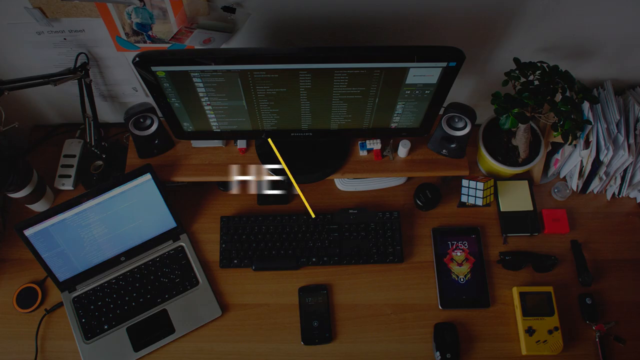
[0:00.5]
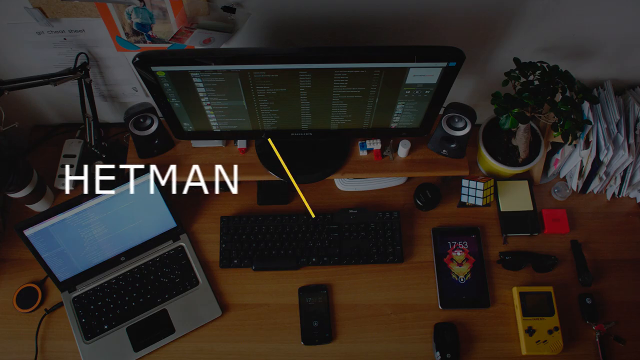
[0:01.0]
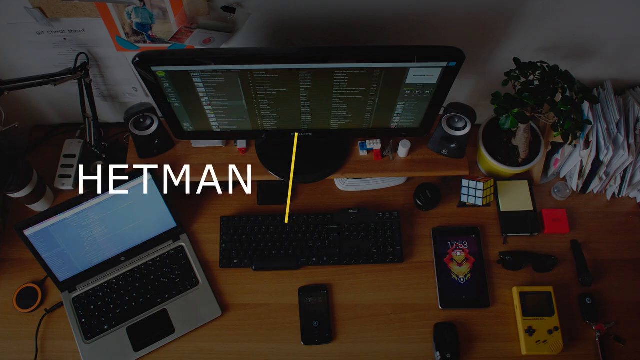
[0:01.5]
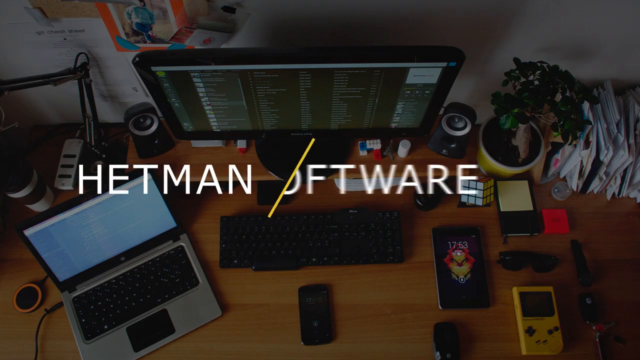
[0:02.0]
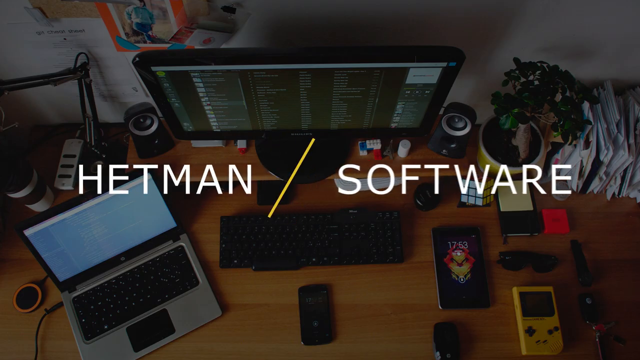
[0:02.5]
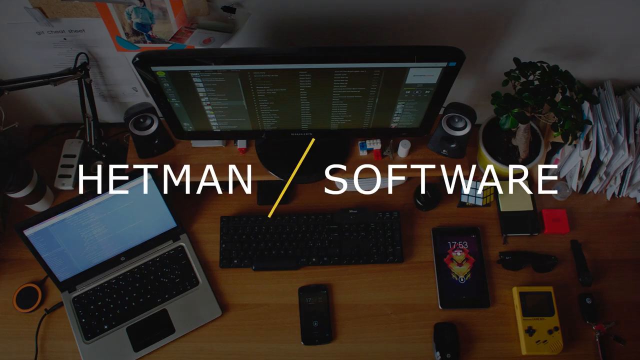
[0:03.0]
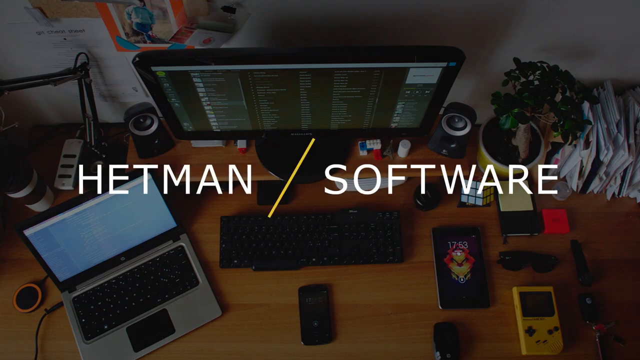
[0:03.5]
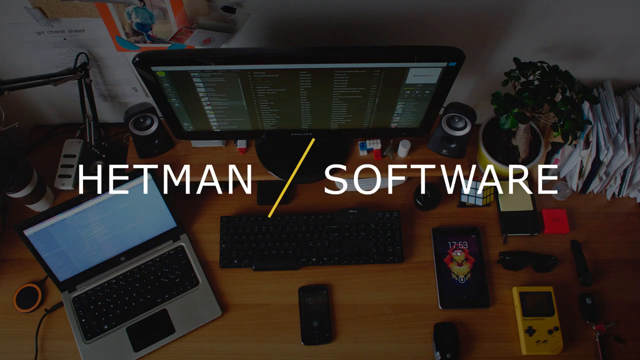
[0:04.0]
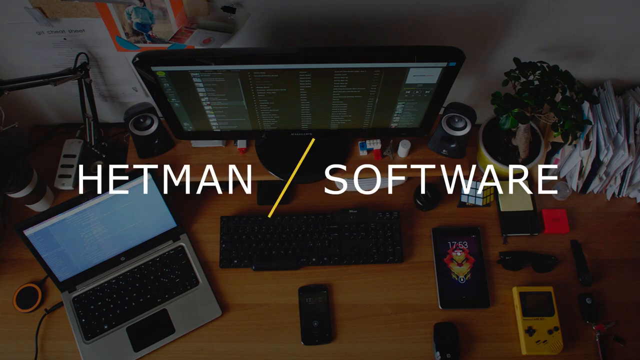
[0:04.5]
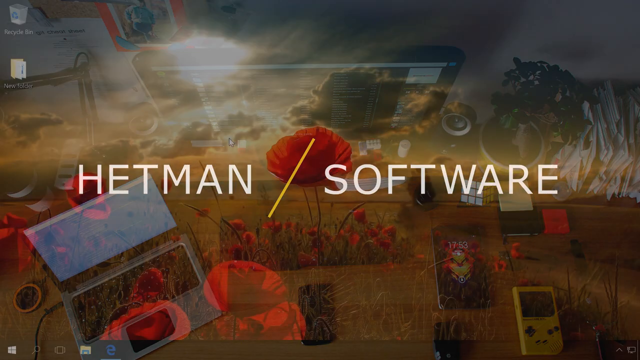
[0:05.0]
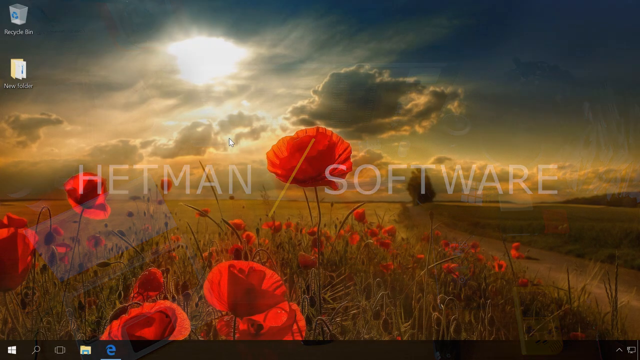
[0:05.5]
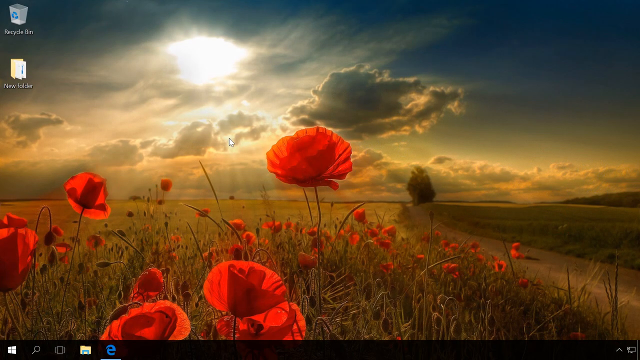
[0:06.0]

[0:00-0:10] The video opens with an overhead view of a workstation, seen from the front and above. A computer monitor with a circular base is on a shelf, with a keyboard below and forward of it. To the right is a mobile phone showing 1753 and an orange and yellow graphic on its screen. To the right of the phone and slightly lower is a yellow Game Boy, and above that is a pair of sunglasses. There is a diary with some Post-it notes on top, and next to the Post-it notes is a Rubik's Cube. There is a plant pot with a small tree. Toward the upper right of the screen are lots of assorted papers, upright one against the other. On either side of the monitor are what look like small speakers. In the center of the desk, facing the keyboard, is what might be another mobile phone or some sort of black remote control device. Further along toward the bottom corner is a laptop with its screen open. Across the center of this busy scene, text appears as if from nowhere: "Hetman", followed by a yellow forward slash and the word "software". The view then changes to an image of a poppy field, with the poppies in the foreground covering the left two thirds of the screen toward the bottom. To the right is what looks like a road stretching into the distance on a slight curve, running from the bottom right toward the center, turning vertical before it reaches the center and heading toward a large tree in the distance. Alongside the road, past the poppy field, appears to be a cornfield, a much lighter crop, and there are also crops on the far side of the road. The land stretches to roughly just below halfway up the image, above which is the horizon and cloud-covered skies, with a bright light between the clouds toward the top left, about a third of the way across from the left-hand side.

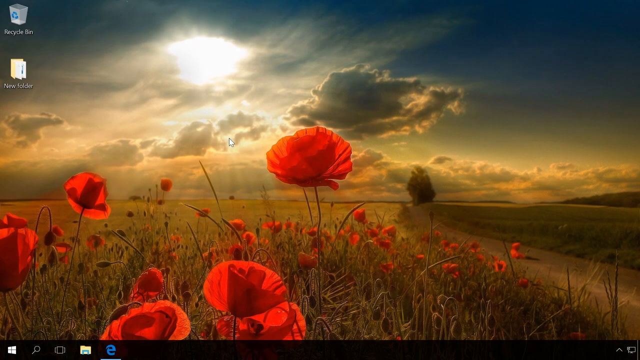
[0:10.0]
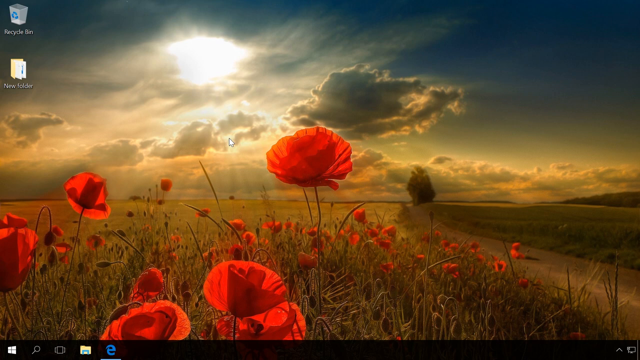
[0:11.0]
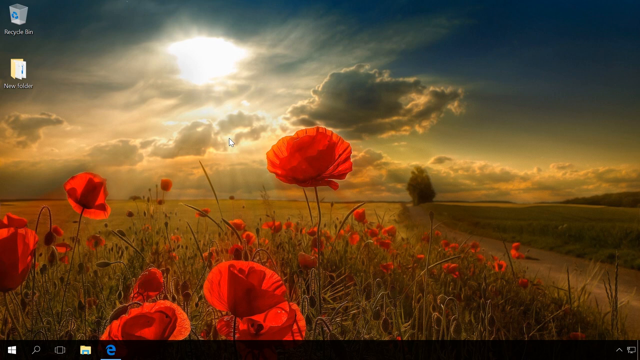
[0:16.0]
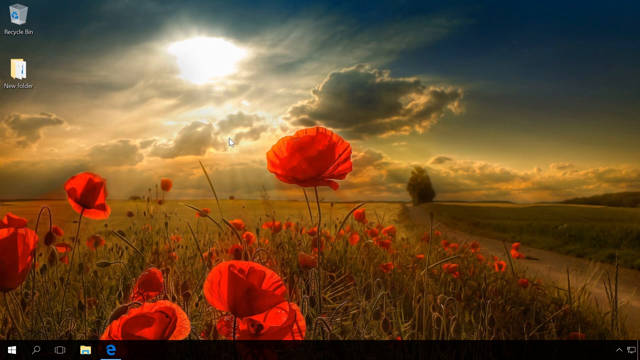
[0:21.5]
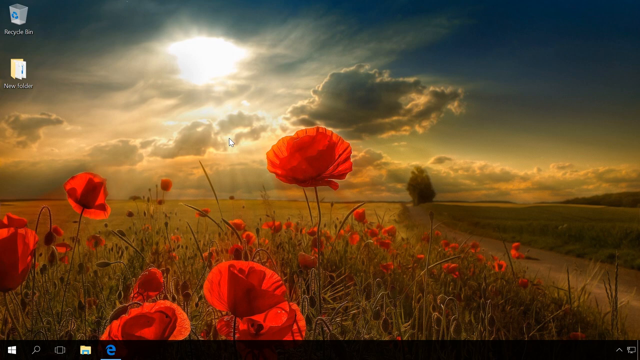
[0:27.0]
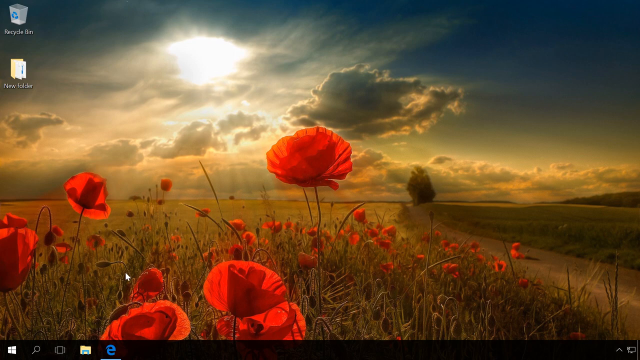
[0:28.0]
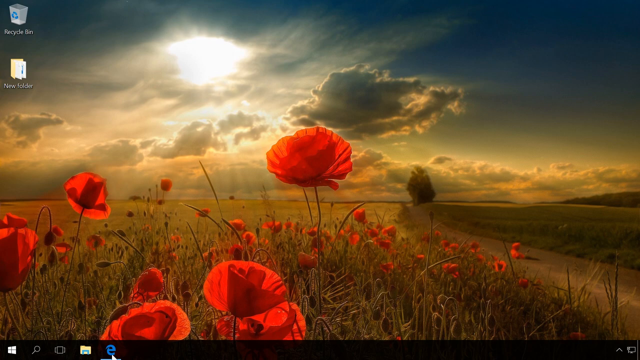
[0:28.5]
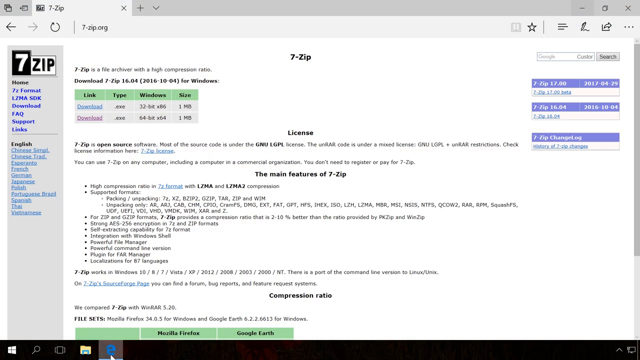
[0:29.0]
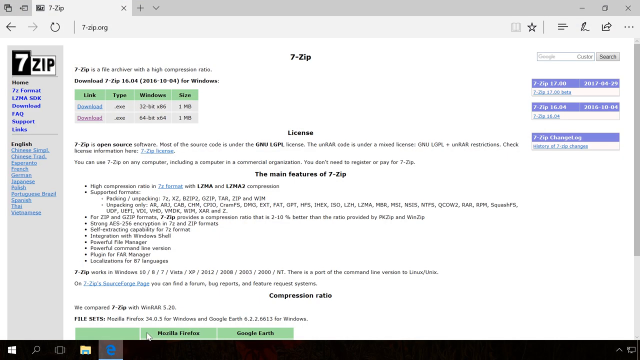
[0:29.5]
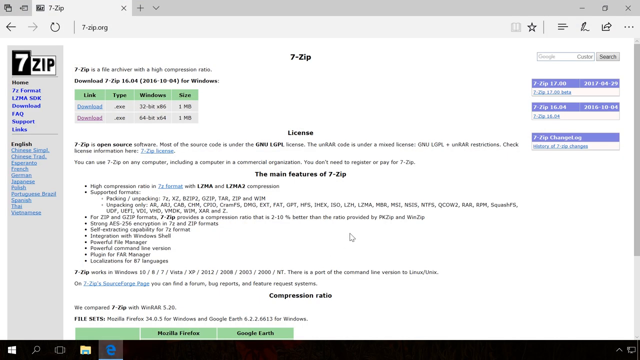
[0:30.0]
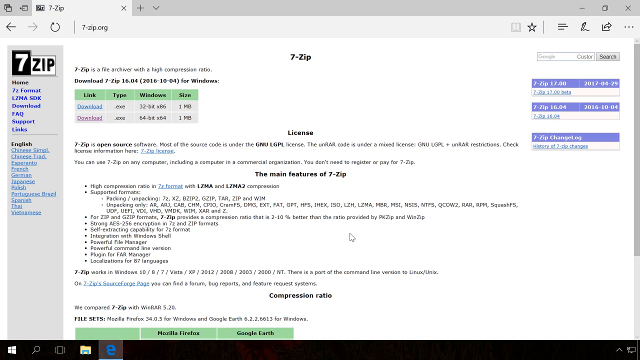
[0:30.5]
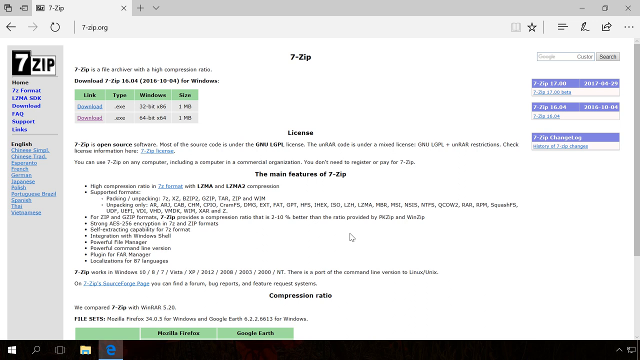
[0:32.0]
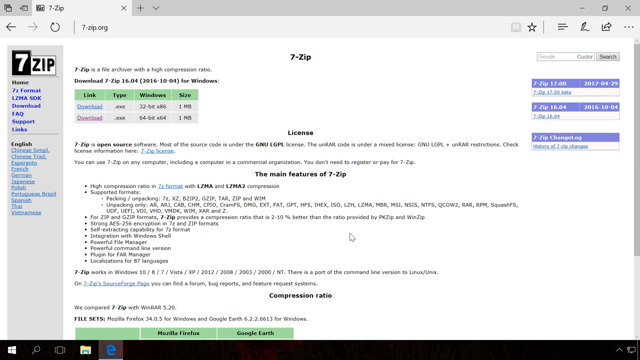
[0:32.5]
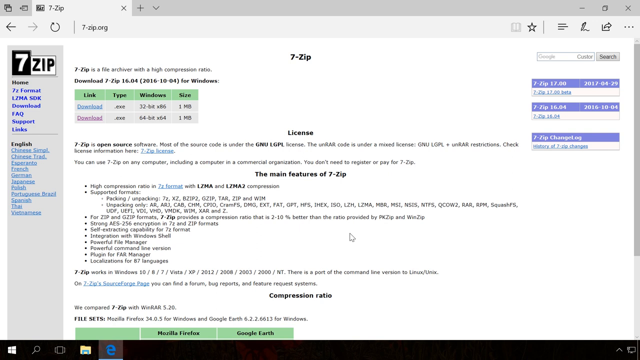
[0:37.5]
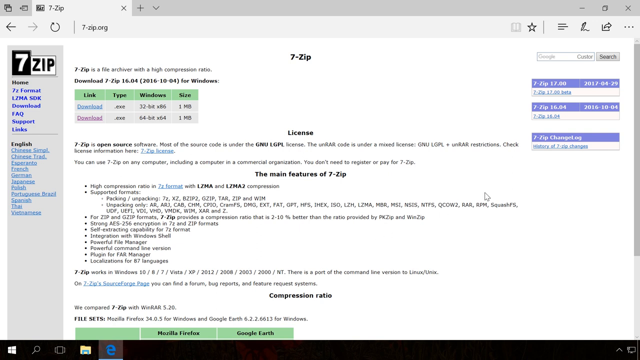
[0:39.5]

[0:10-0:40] The poppy field image is still there, and from about halfway across the poppy field a light is visible far above it. The image is the screen of a device: in the top left corner are the Recycle Bin and, below it, New Folder, with their icons. The cursor moves down to the bottom of the screen, and a largely white screen appears with a grey bar up the left-hand side, topped by the word "7 zip". The browser tab reads "7 zip" and the address bar shows "7-zip.org". Down the left side under 7-Zip is a list: apparently "home", then "7-Z format", then "LZMA SDK". The word "home" is in black, and below it the font is all blue. Next in the list are "download", "FAQ", and "support" and "links". Then comes a gray horizontal bar, below which is "English" in black font, followed by a list of languages starting with "Chinese simple" and "Chinese trad", then "Esperanto", down to "Vietnamese" at the bottom of the list, though not at the bottom of the screen.